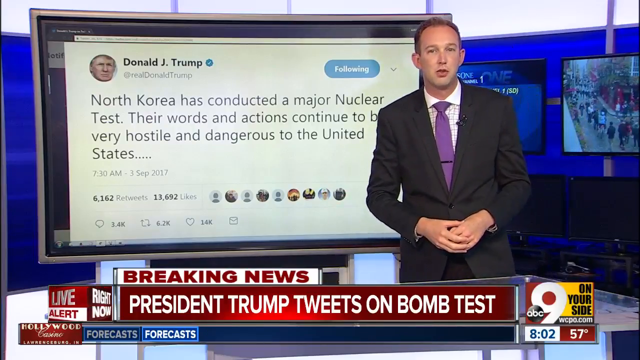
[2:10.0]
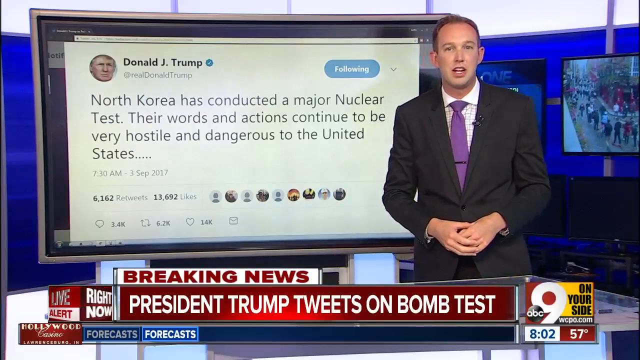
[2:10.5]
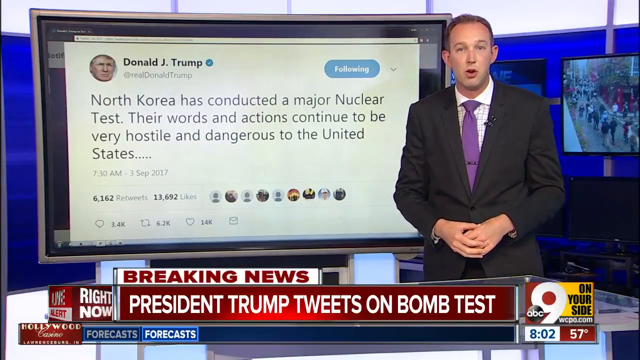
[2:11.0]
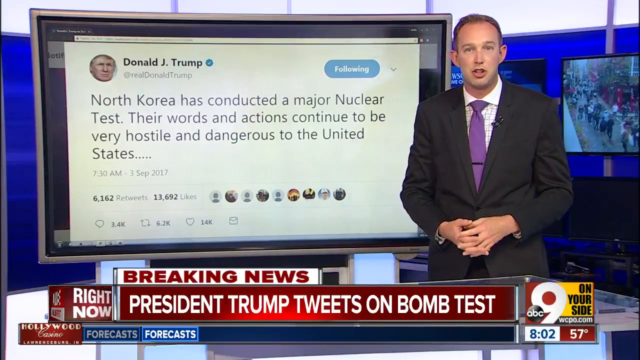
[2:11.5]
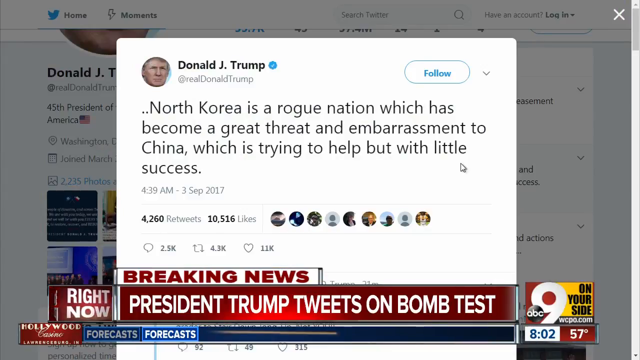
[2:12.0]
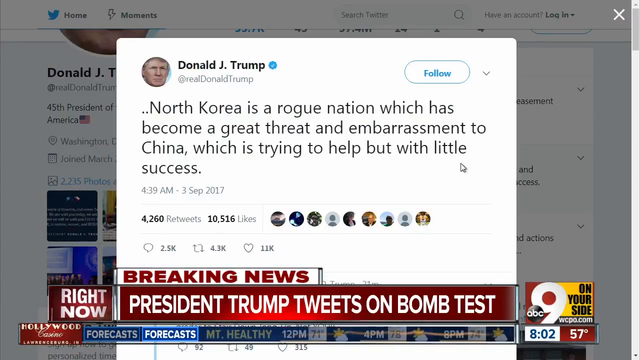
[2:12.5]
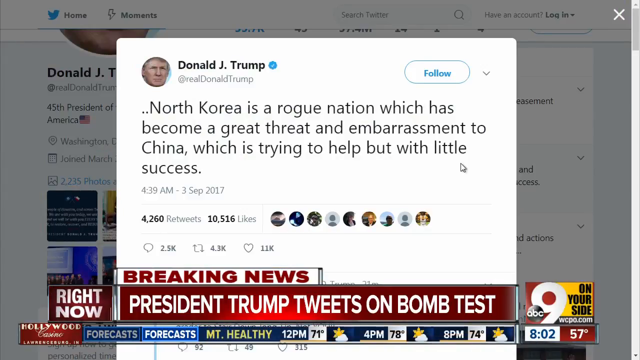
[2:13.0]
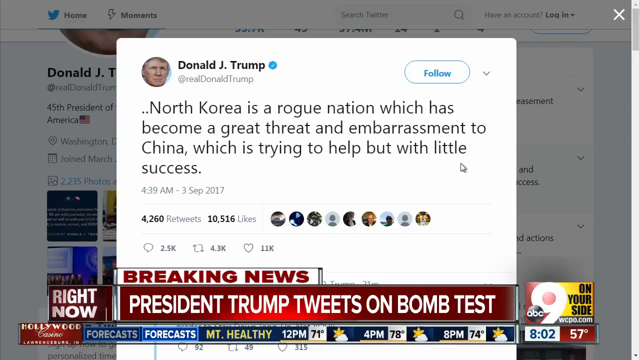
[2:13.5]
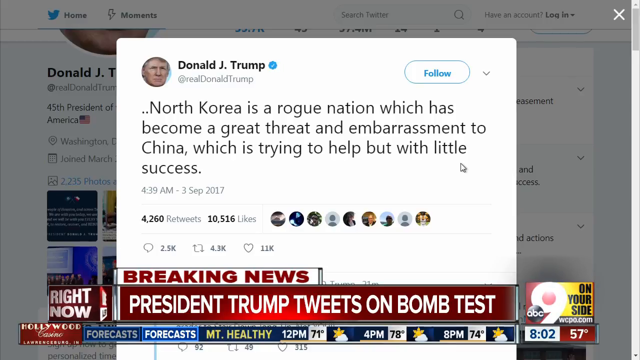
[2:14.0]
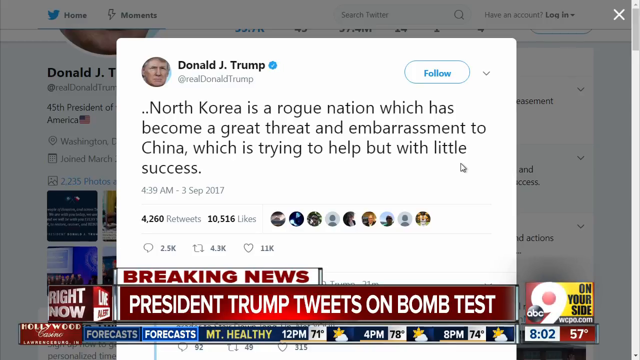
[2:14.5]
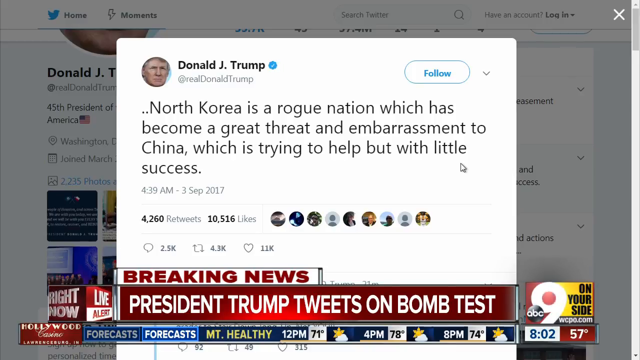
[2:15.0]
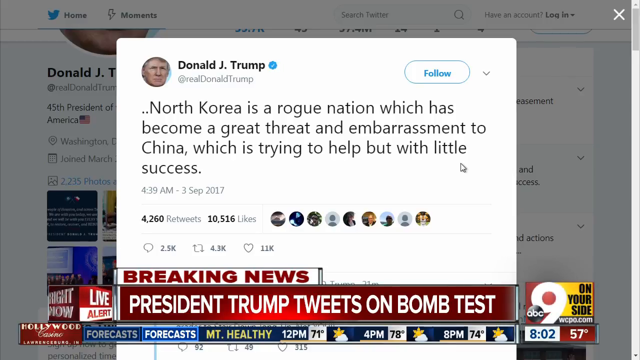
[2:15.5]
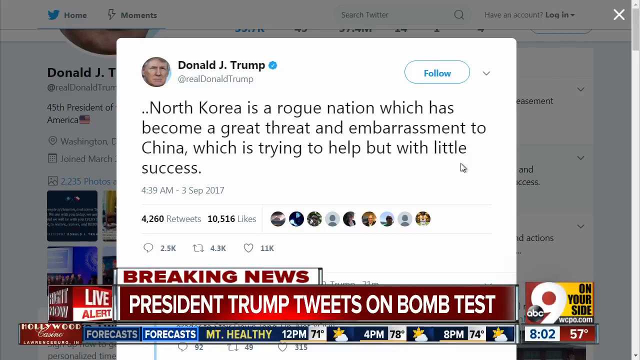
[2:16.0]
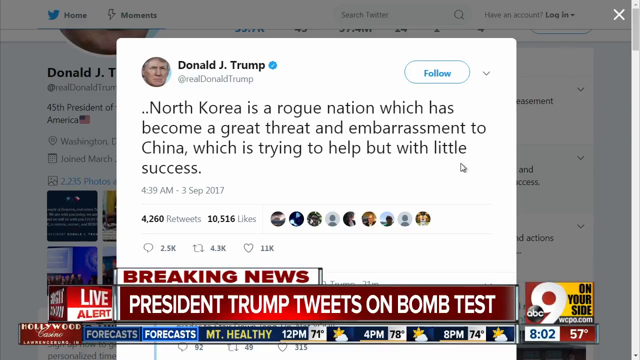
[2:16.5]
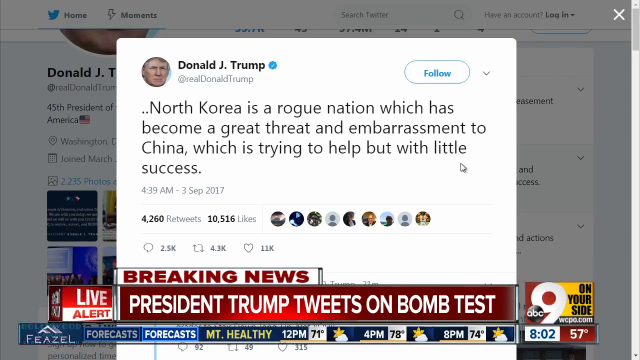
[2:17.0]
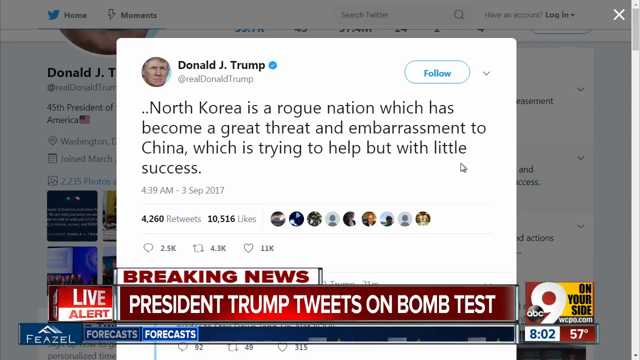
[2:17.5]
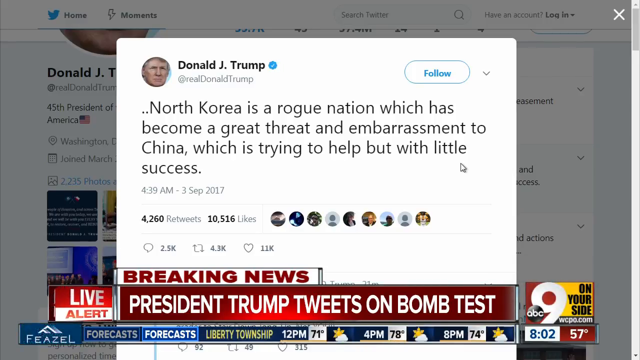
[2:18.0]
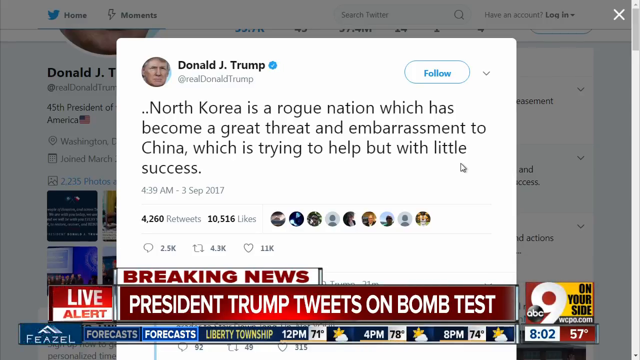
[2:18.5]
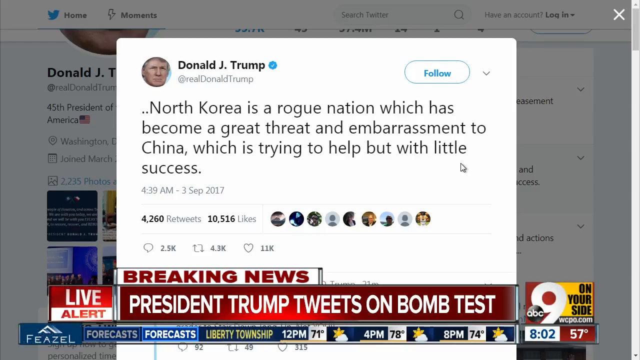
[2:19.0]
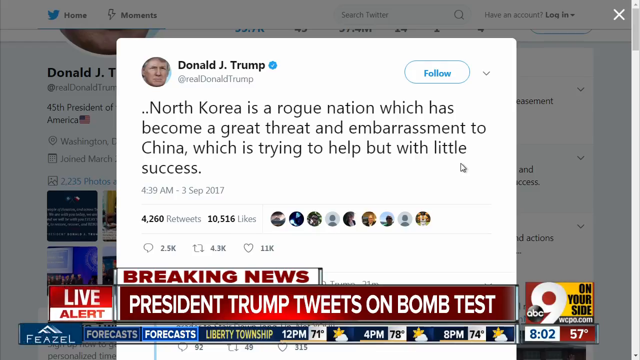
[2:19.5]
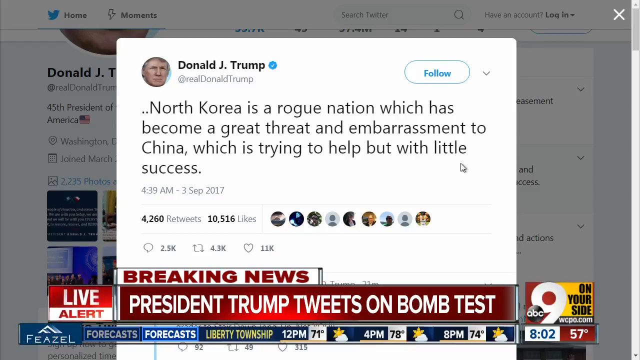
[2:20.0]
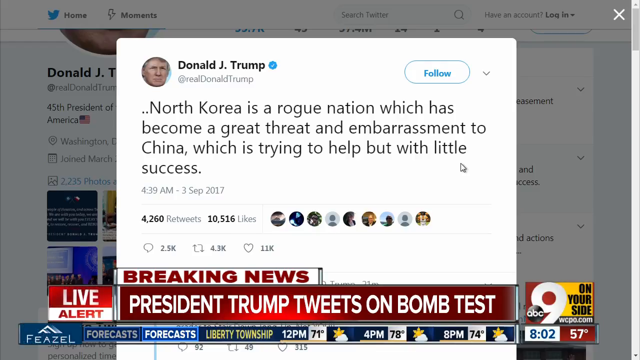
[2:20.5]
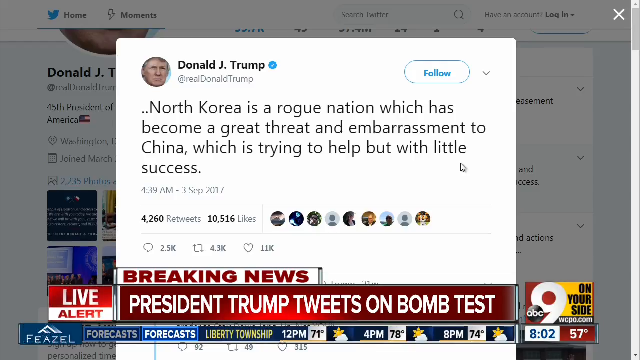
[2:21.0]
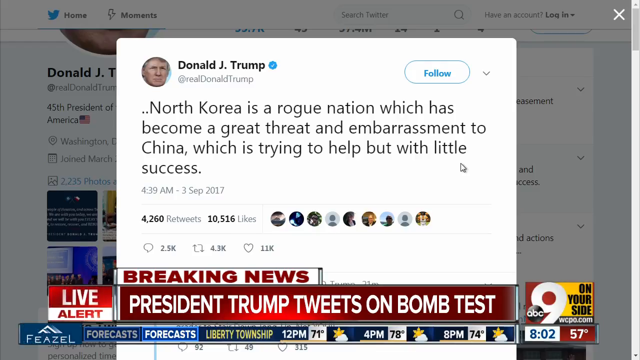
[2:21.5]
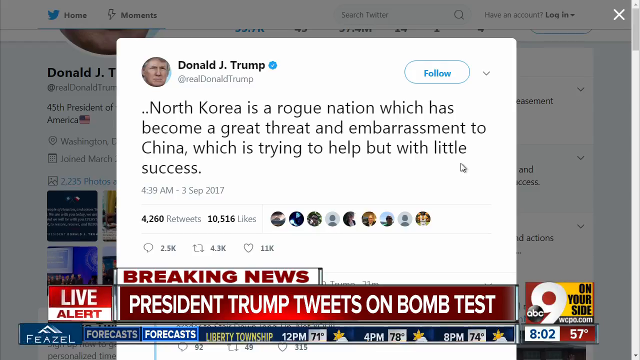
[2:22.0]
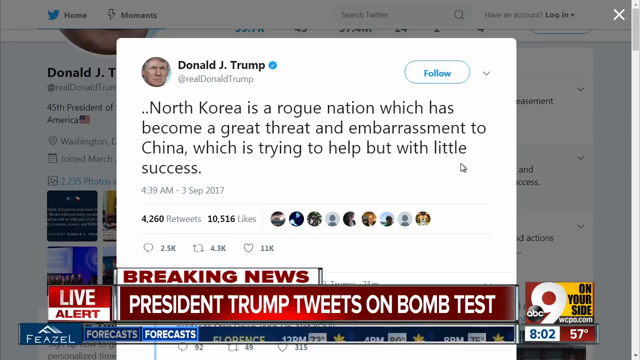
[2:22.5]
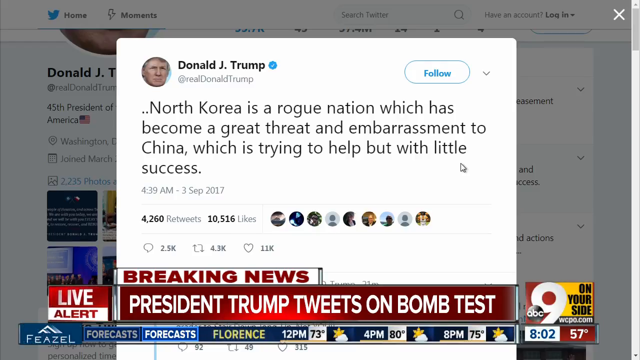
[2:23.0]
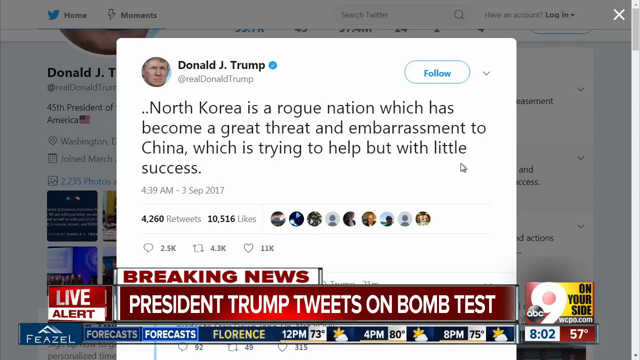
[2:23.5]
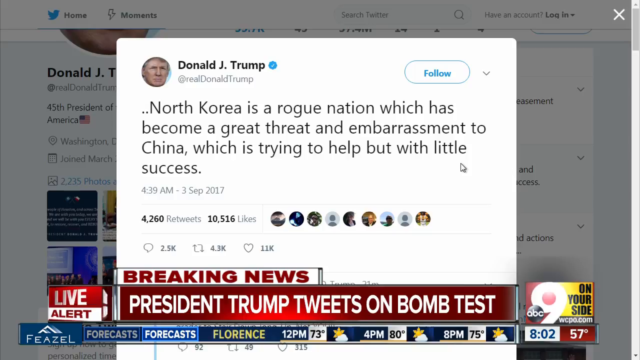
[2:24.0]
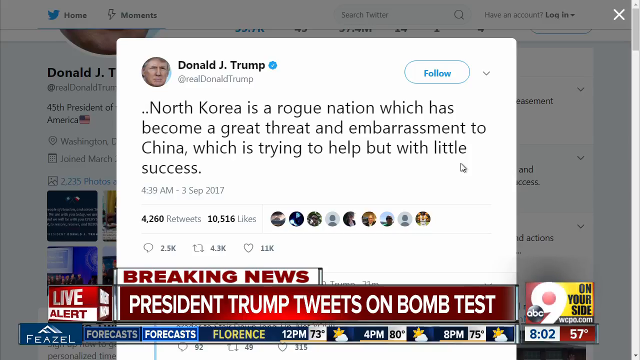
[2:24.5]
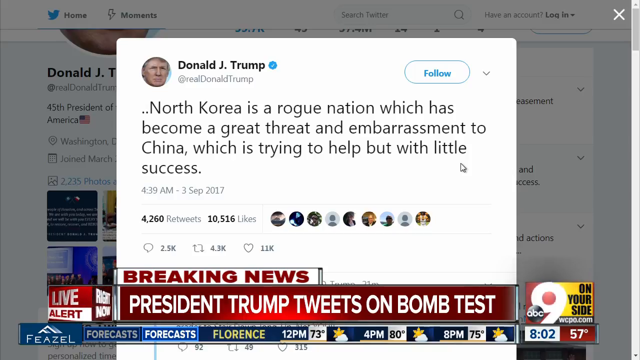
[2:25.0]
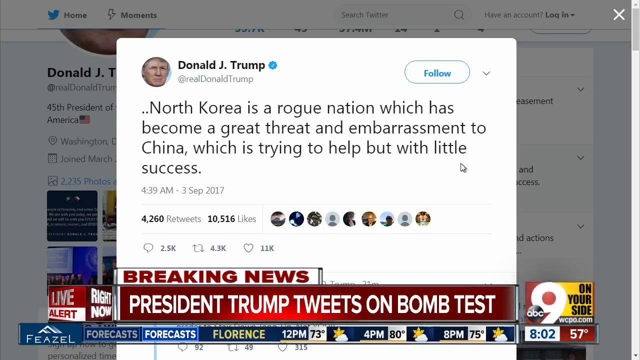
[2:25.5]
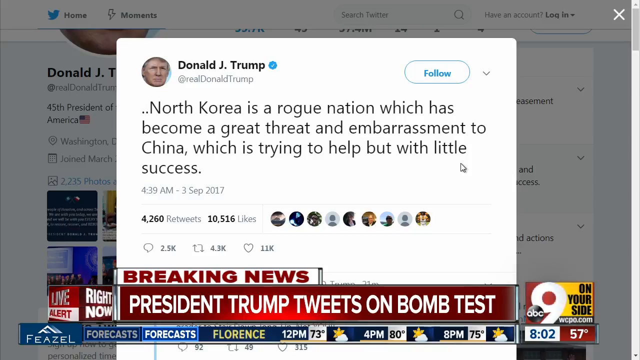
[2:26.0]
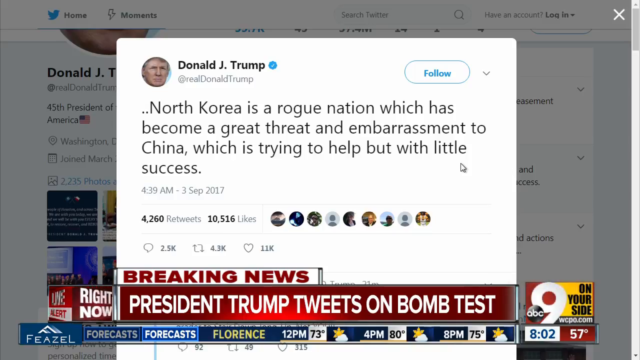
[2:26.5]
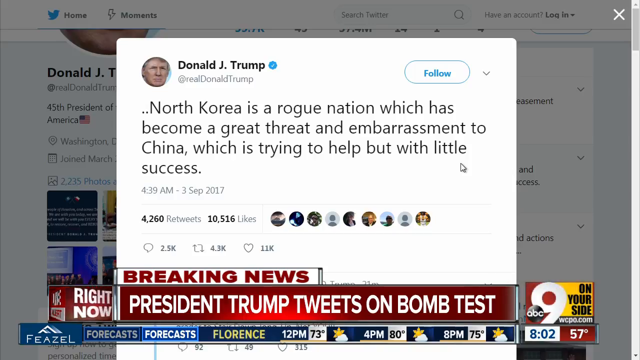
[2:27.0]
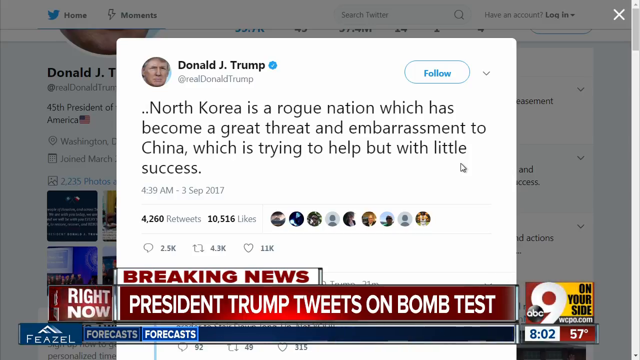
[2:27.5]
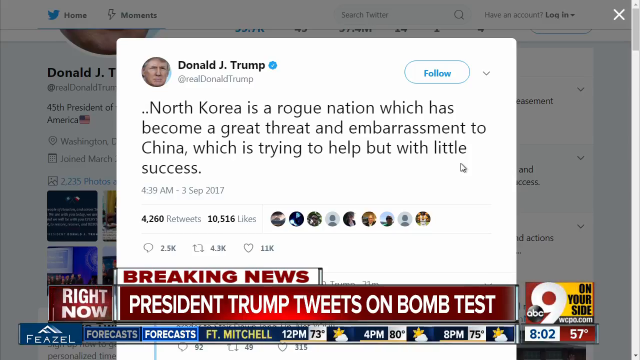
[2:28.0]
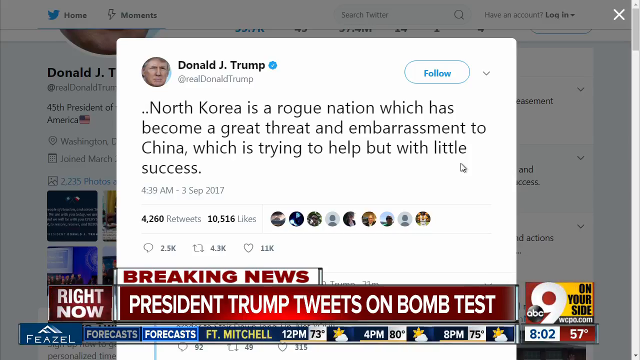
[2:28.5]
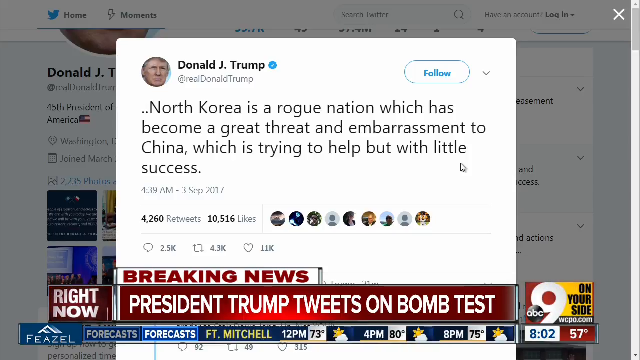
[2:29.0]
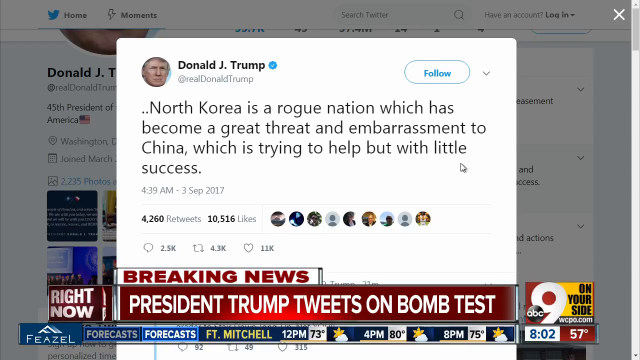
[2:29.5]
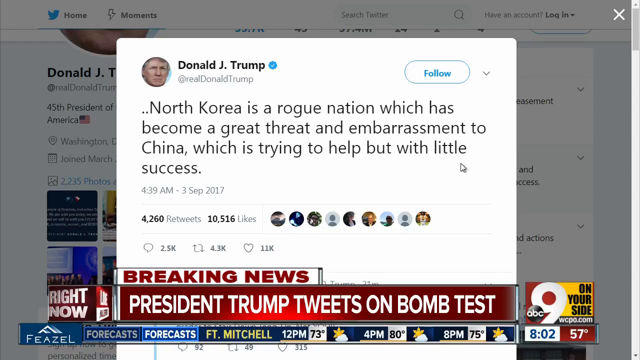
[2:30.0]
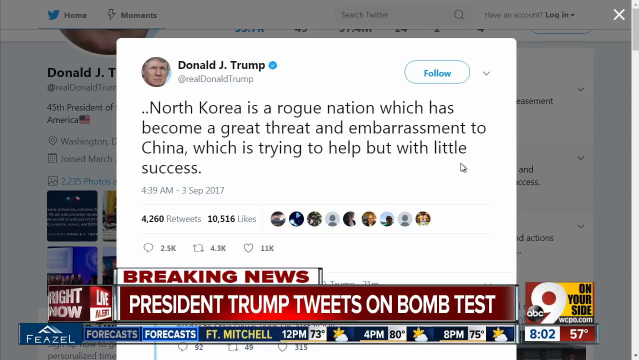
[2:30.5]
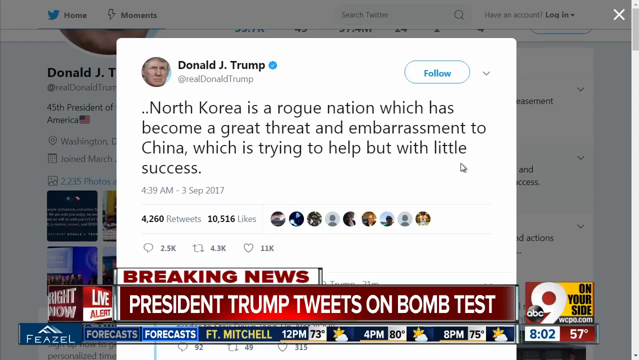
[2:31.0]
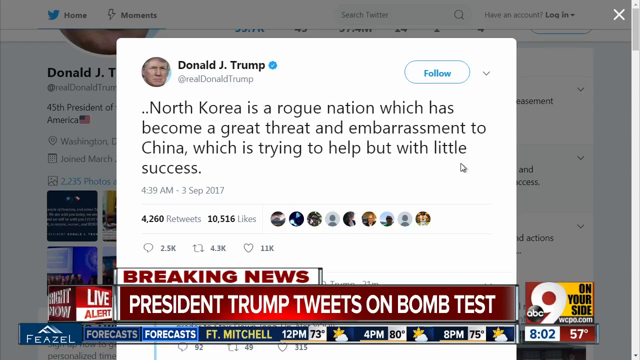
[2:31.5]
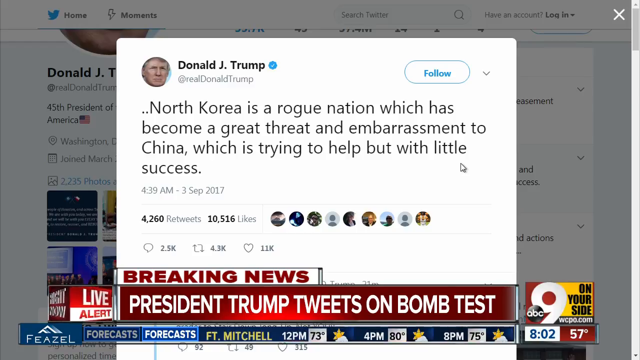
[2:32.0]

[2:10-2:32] The screen behind the man now shows a tweet by Donald J. Trump reading "North Korea has conducted a major nuclear test. Their words and actions continue to be very hostile and dangerous to the United States." It is dated September 3rd, 2017 at 7:30am and has 6,162 retweets and 13,692 likes. Text at the bottom of the screen reads "Breaking news! President Trump tweets on bomb test". Another tweet from Donald J. Trump, on a white rectangle, reads "North Korea is a rogue nation which has become a great threat and embarrassment to China, which is trying to help but with little success." Behind it is Trump's Twitter profile, from his first term as president given the 2017 date; the left column says "45th President of America", lists his location as Washington, D.C., and shows that he joined in March, with the year not visible.